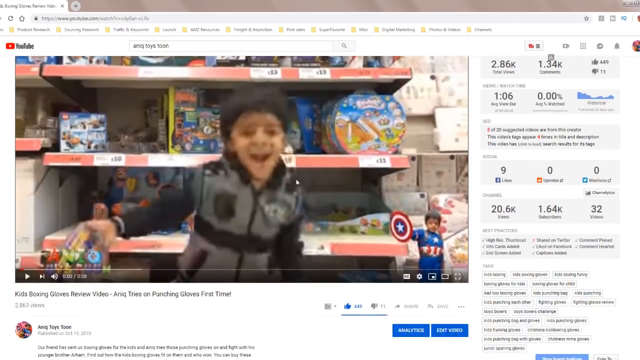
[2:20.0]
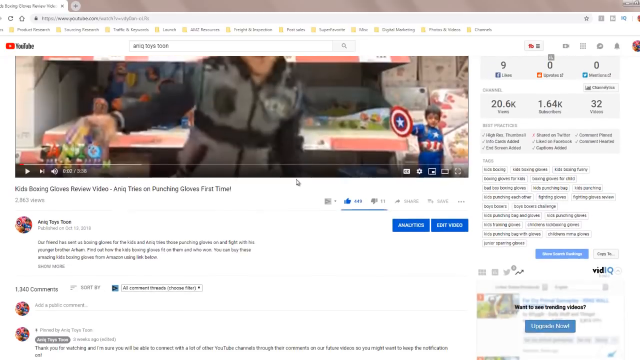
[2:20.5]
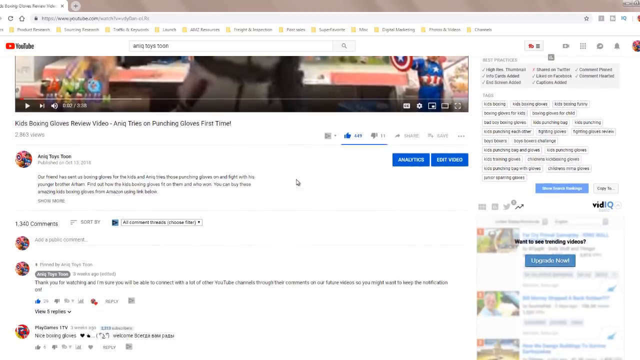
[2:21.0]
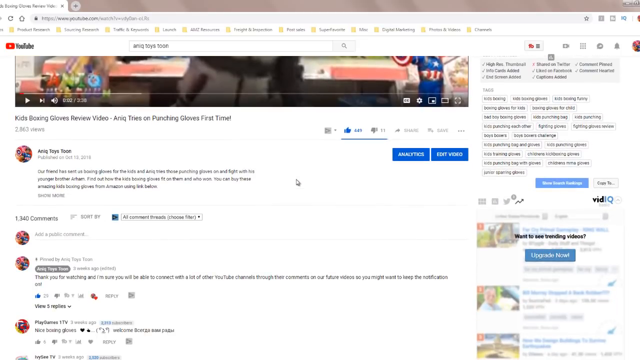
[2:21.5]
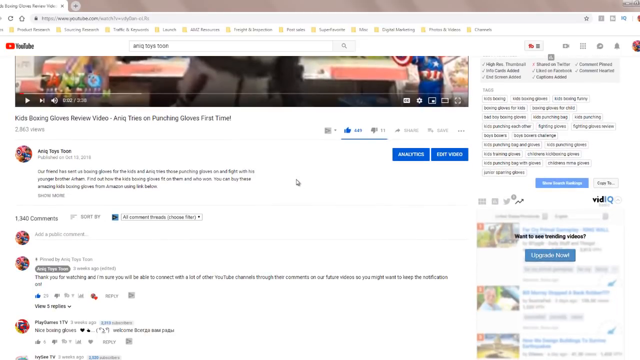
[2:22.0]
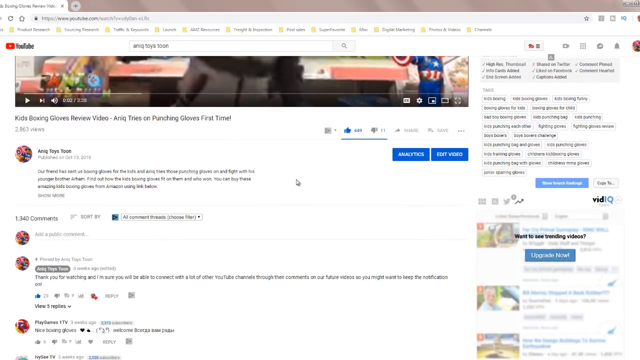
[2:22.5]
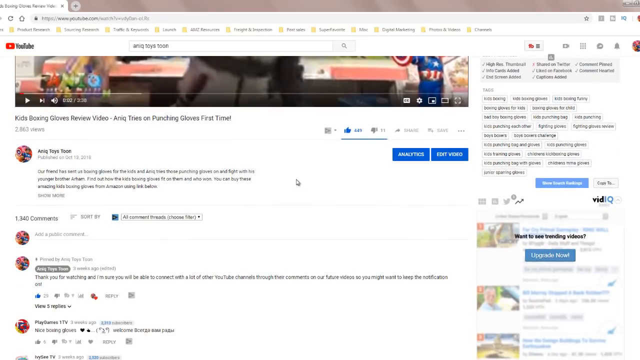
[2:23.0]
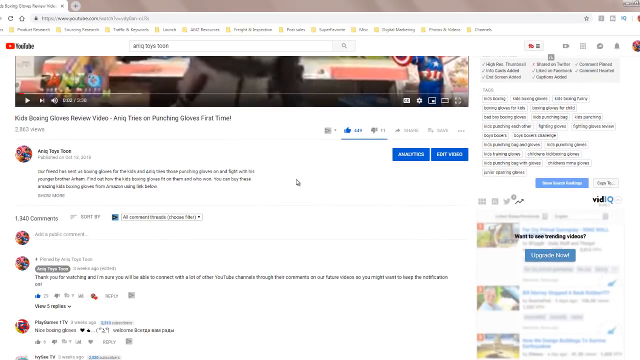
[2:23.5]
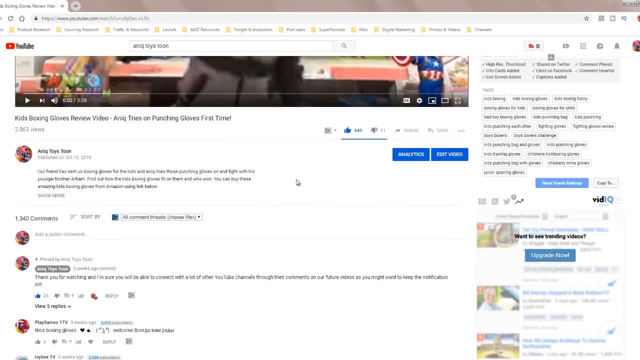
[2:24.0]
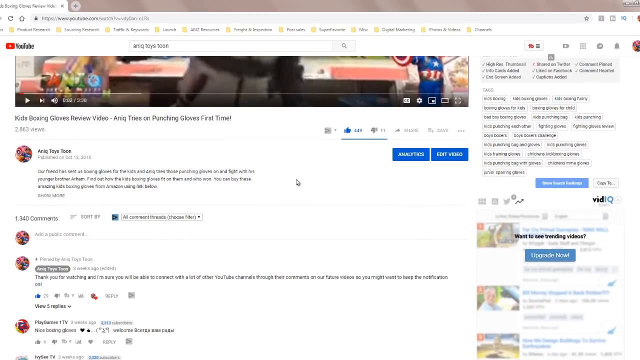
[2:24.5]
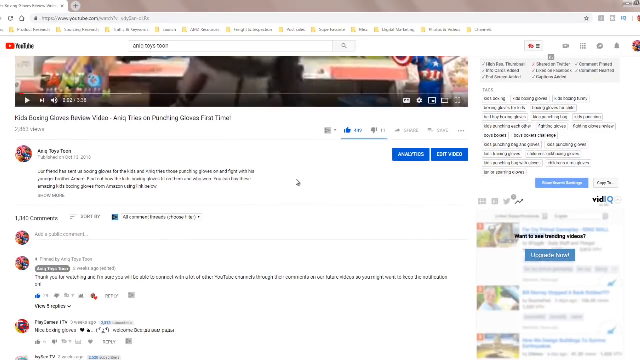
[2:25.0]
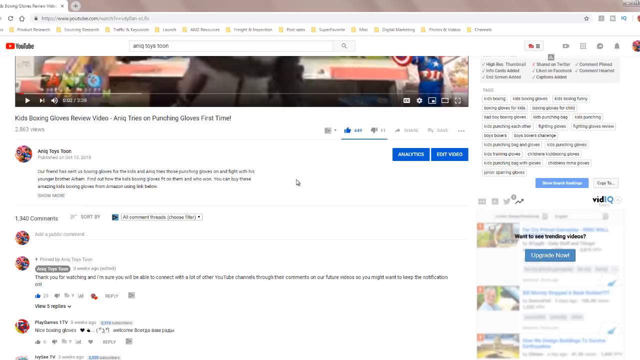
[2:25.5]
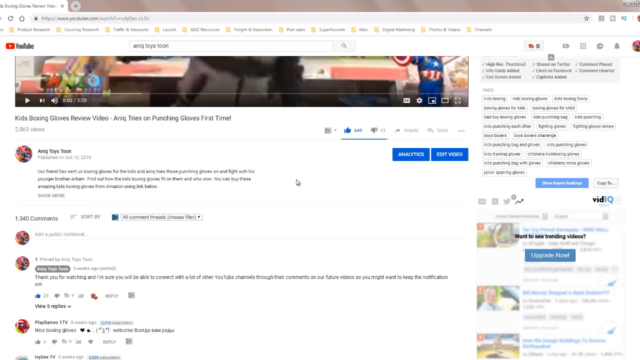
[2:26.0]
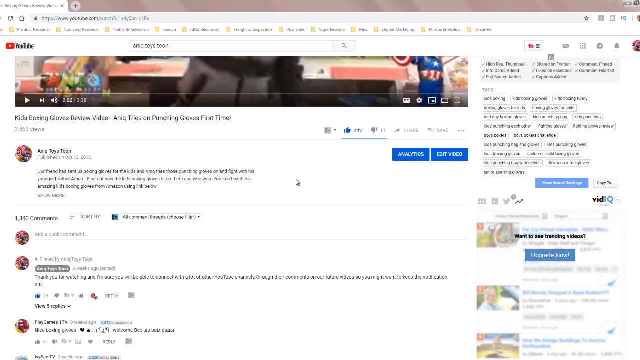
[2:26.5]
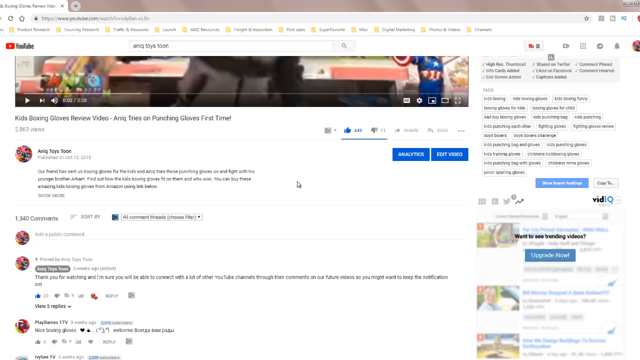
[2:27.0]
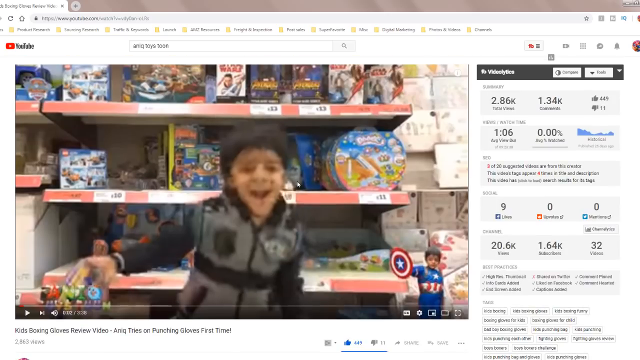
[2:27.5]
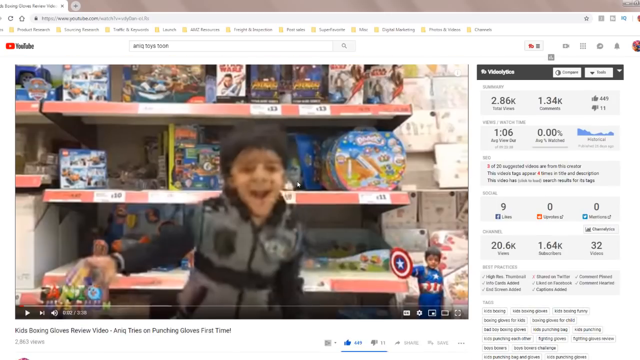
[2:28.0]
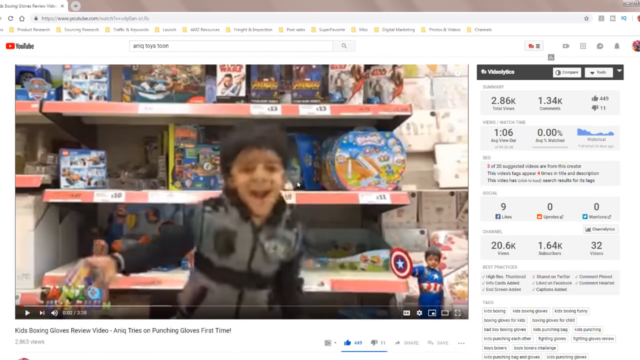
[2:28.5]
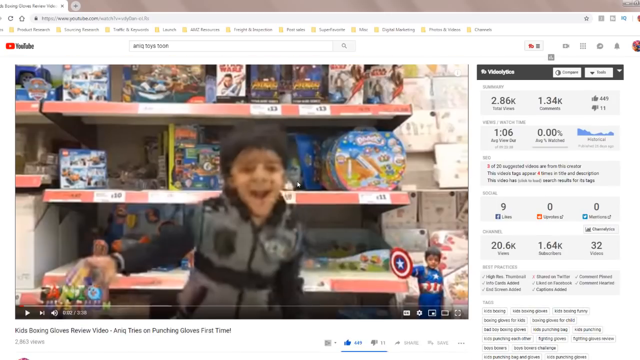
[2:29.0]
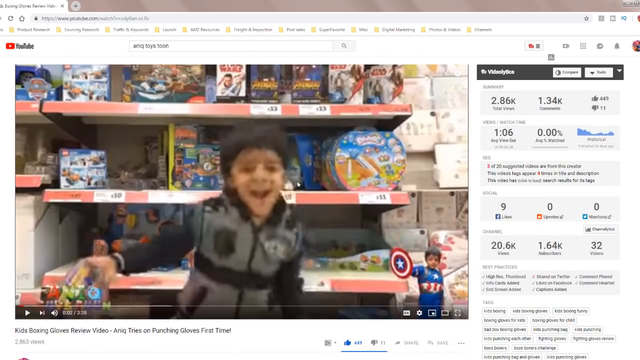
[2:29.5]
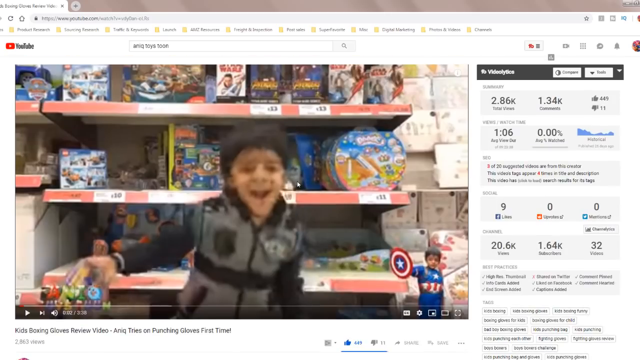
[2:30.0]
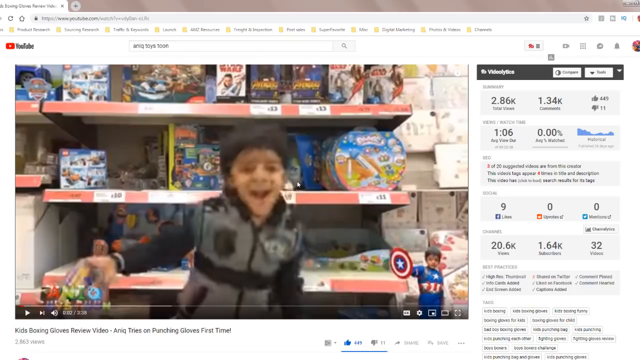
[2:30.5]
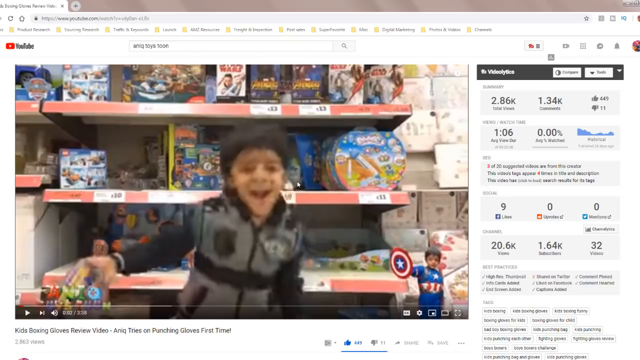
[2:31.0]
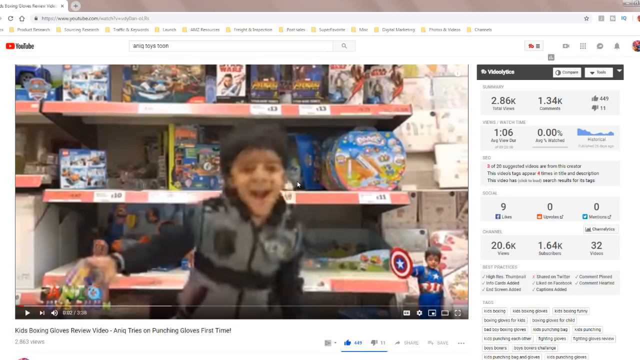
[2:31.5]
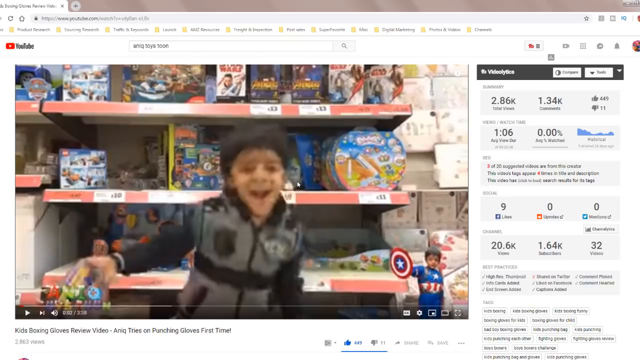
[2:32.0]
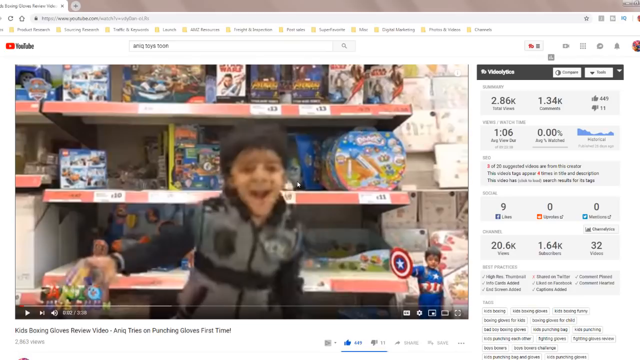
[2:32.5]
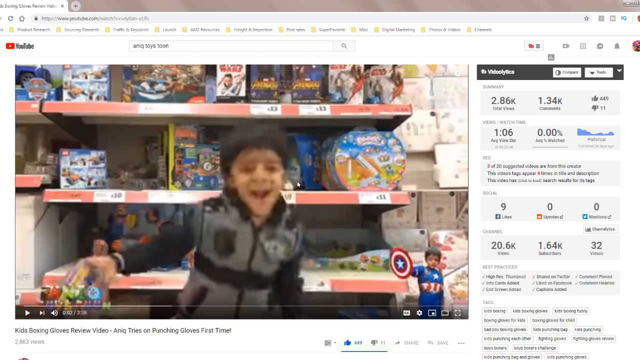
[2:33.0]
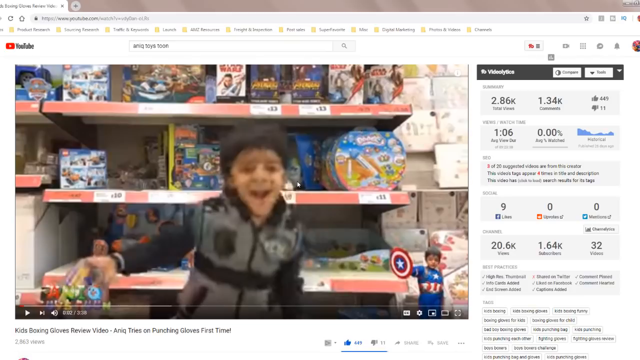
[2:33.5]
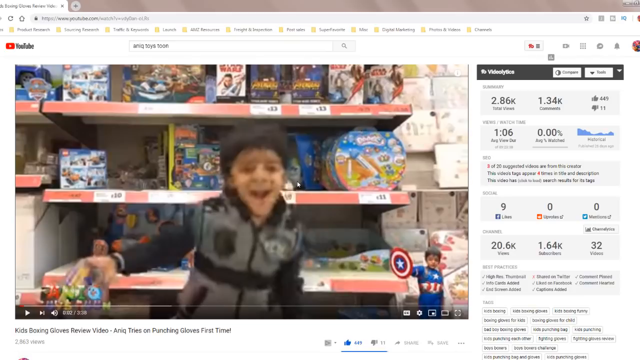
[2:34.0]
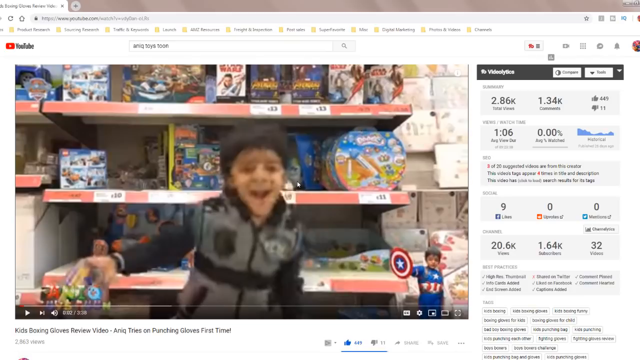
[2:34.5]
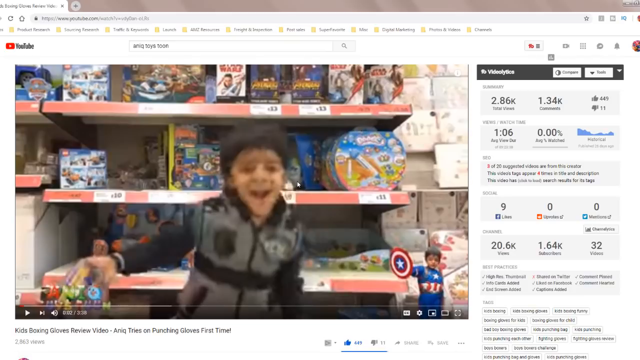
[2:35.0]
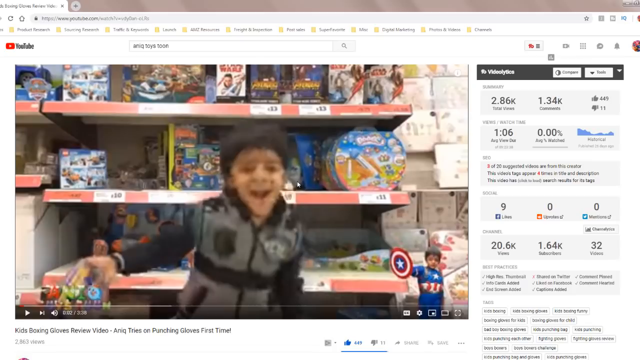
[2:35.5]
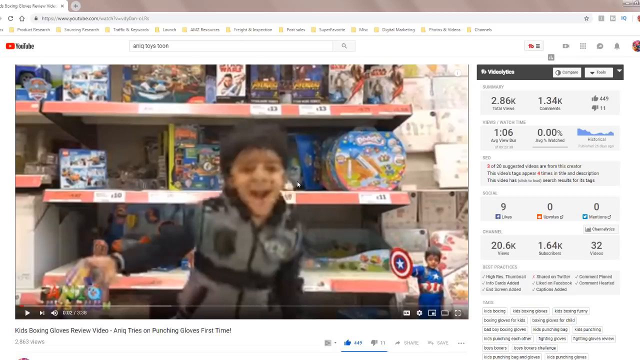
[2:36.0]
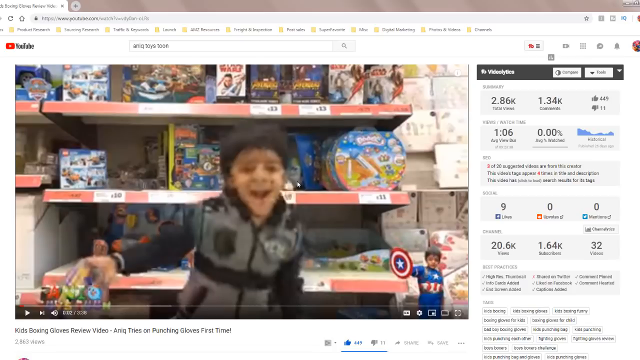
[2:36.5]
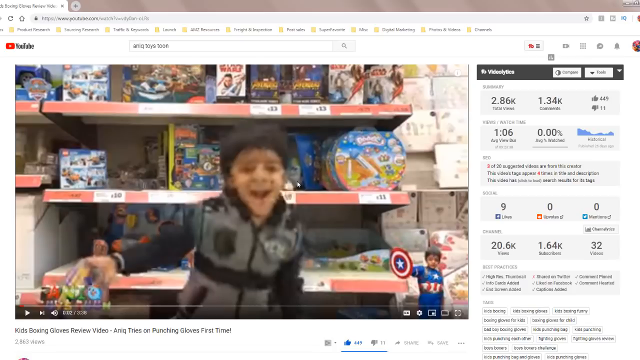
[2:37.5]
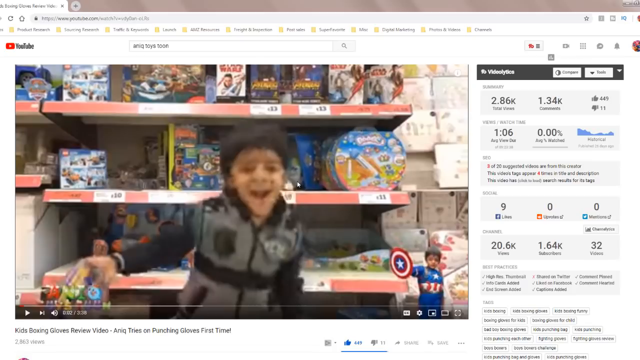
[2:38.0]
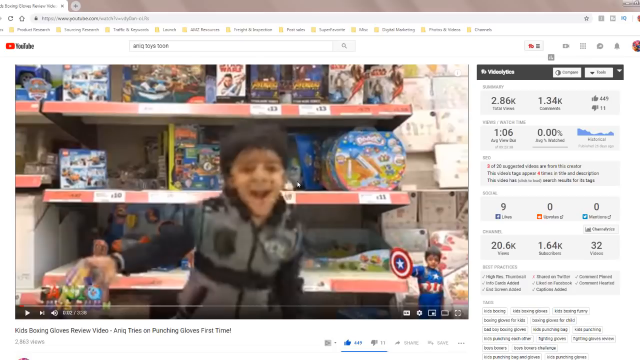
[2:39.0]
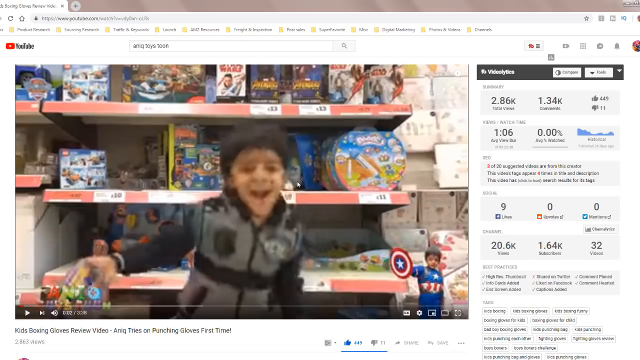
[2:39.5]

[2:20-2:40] A YouTube video is captioned "Kids Boxing Gloves Review video. Anik tries punching gloves for the first time." On the right-hand side, detailed information about the video is shown, such as 1034 comments, 2086 views and 9 likes on Facebook, and for the channel 20k views and 32 videos. The person scrolls down to show a few comments, then scrolls up once again, showing all the options on the page. The video looks very colorful; the boy looks very happy, and behind him are a whole lot of toys, including superhero toys, puzzle toys and very colorful toys.